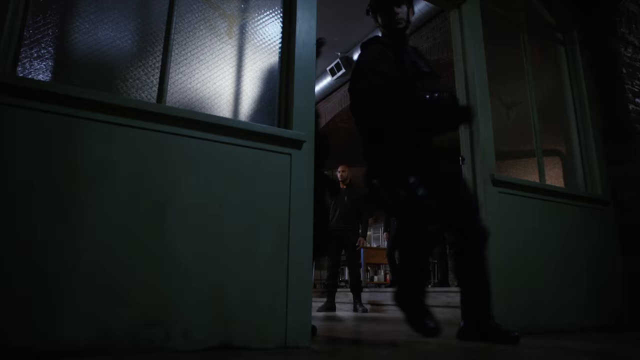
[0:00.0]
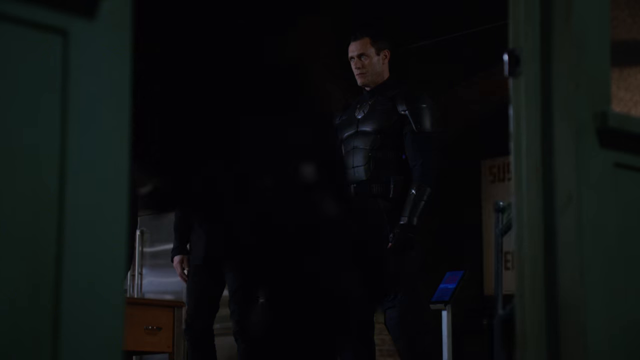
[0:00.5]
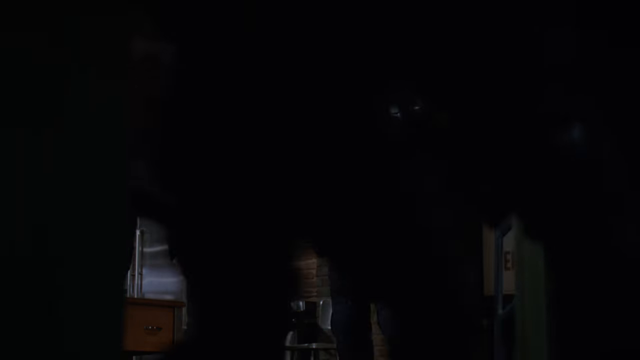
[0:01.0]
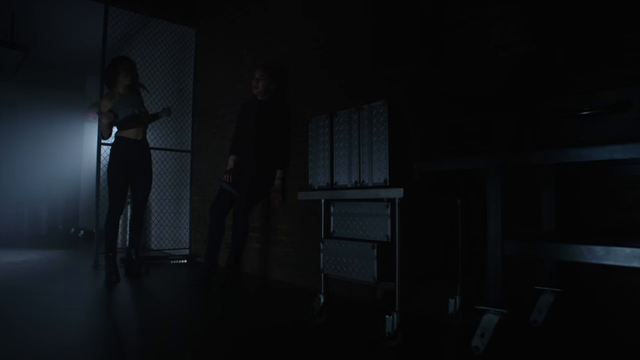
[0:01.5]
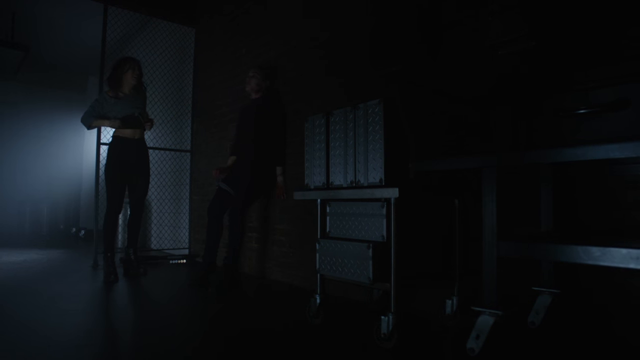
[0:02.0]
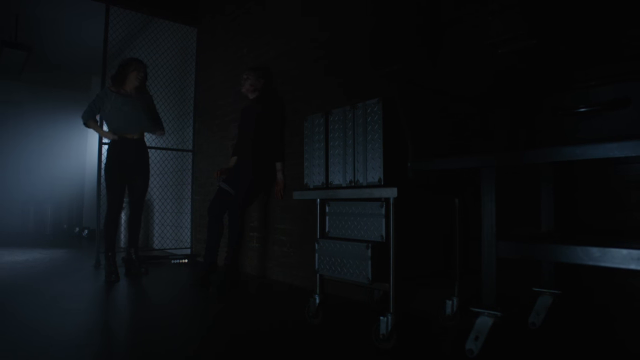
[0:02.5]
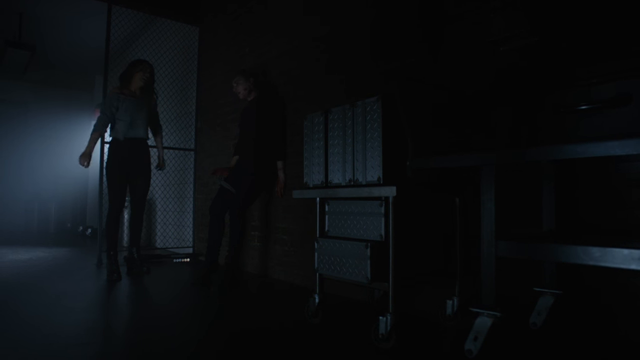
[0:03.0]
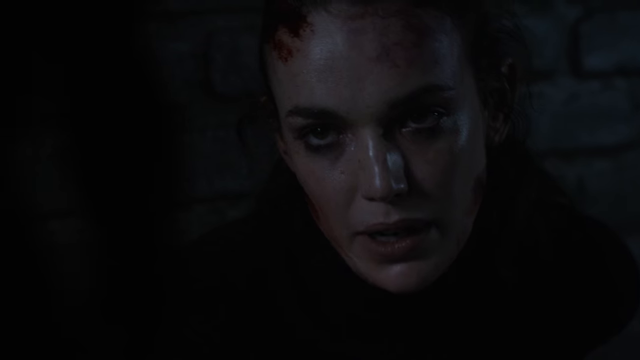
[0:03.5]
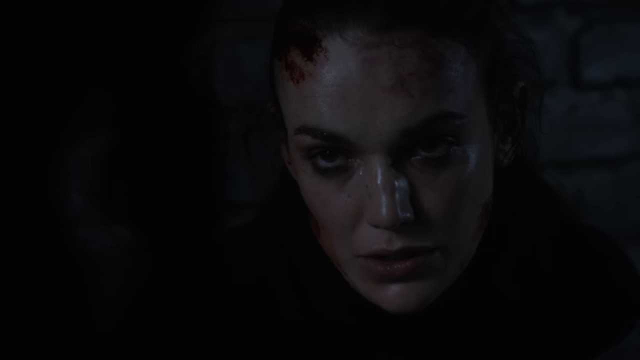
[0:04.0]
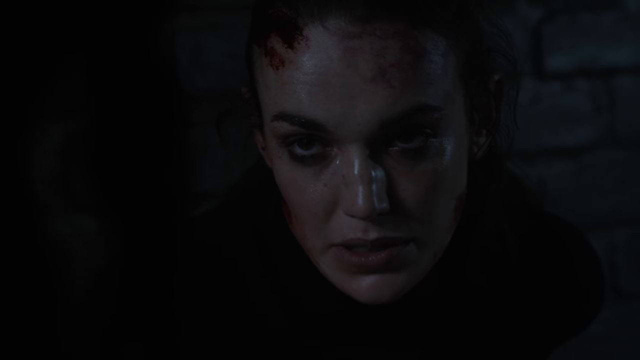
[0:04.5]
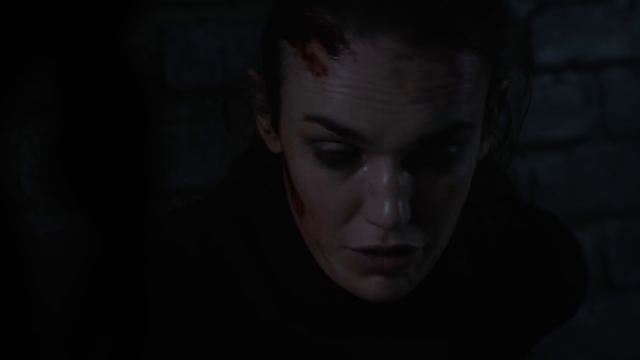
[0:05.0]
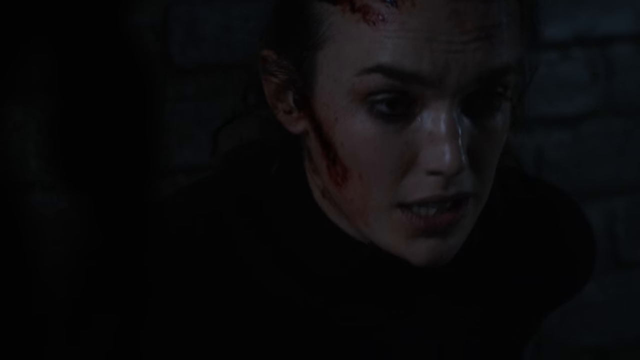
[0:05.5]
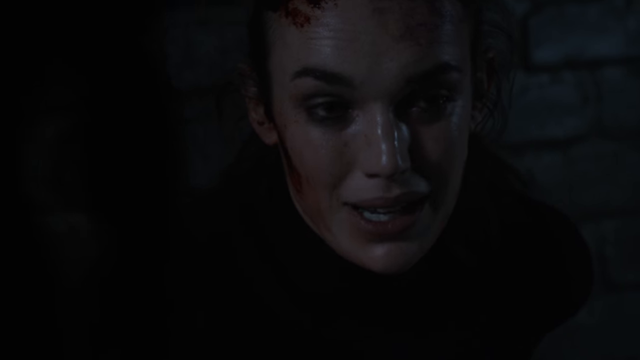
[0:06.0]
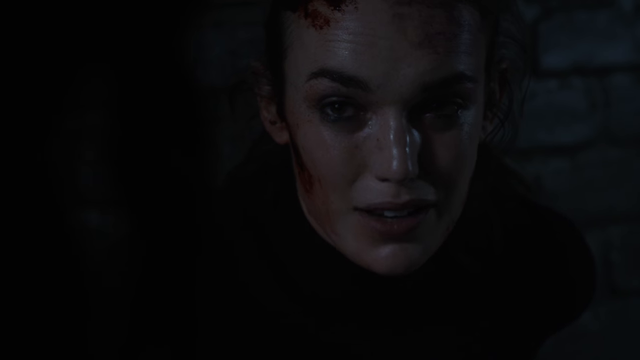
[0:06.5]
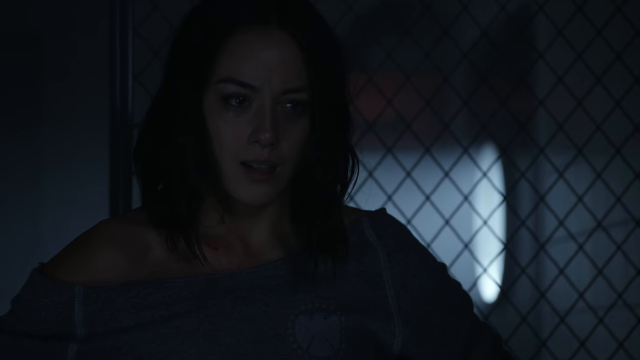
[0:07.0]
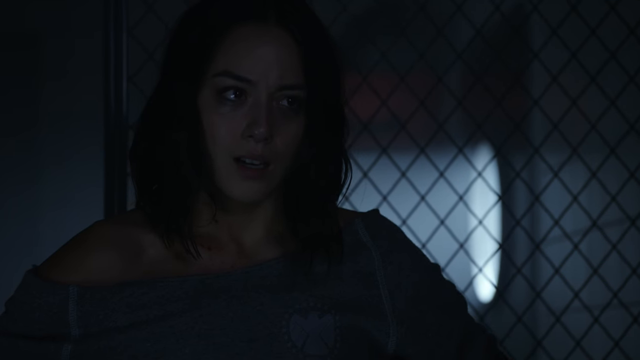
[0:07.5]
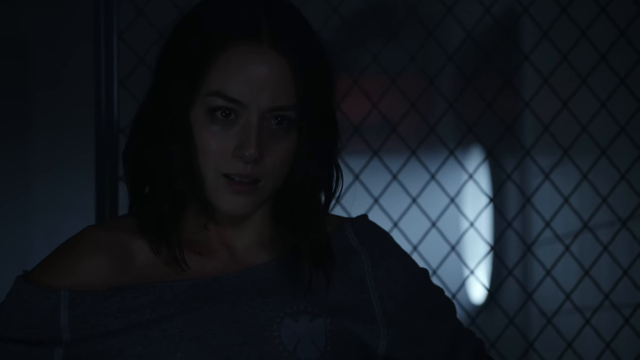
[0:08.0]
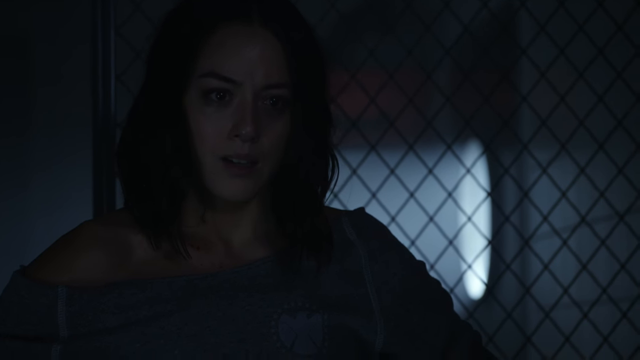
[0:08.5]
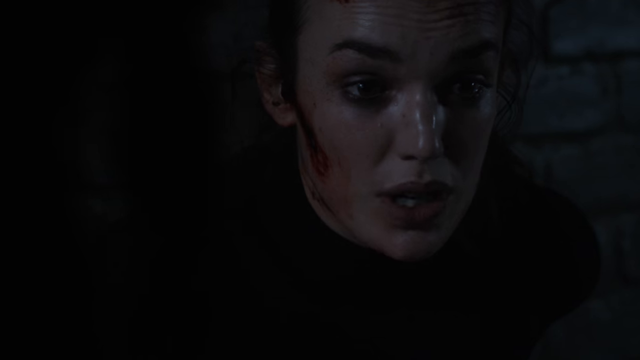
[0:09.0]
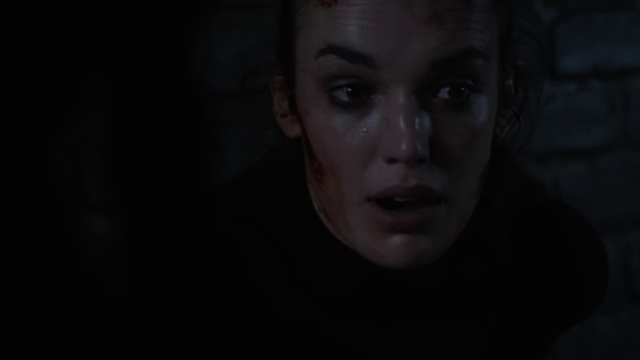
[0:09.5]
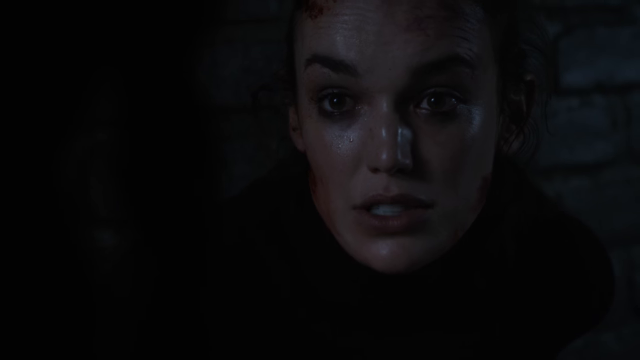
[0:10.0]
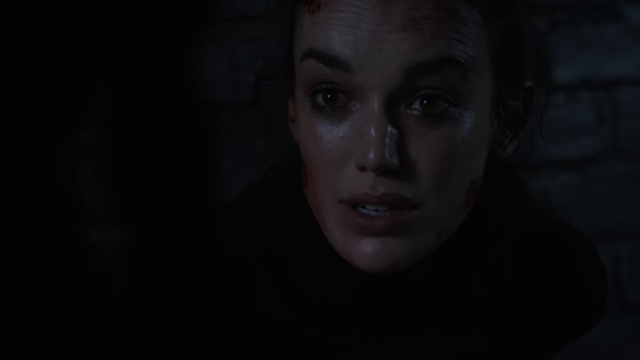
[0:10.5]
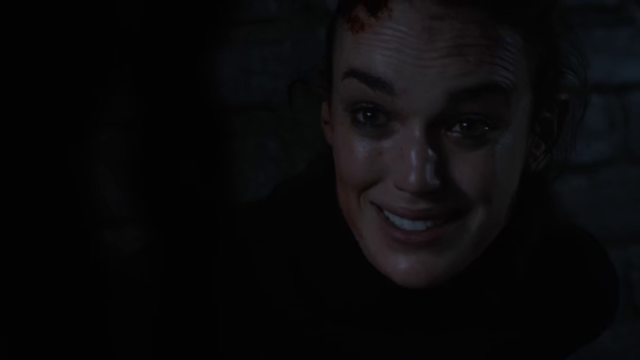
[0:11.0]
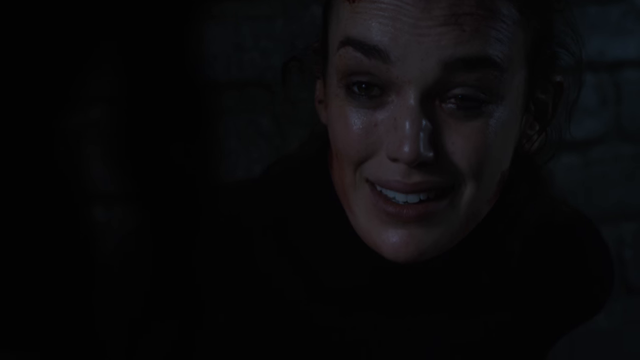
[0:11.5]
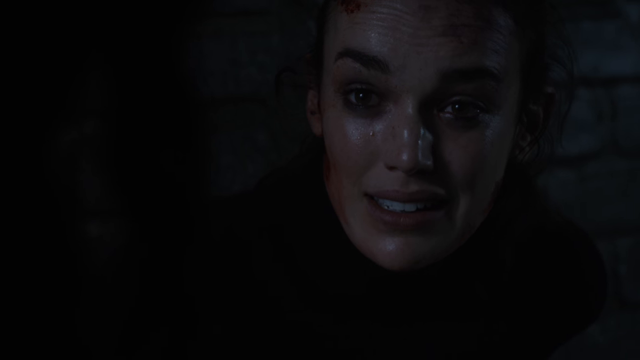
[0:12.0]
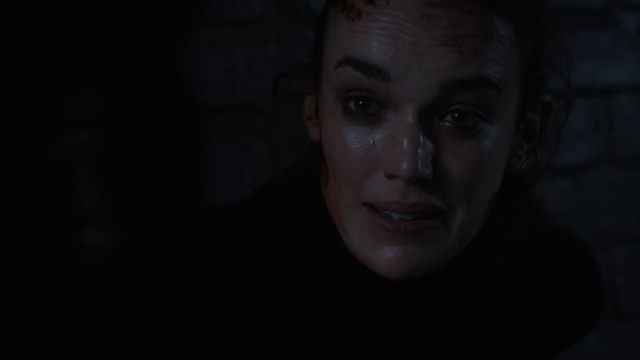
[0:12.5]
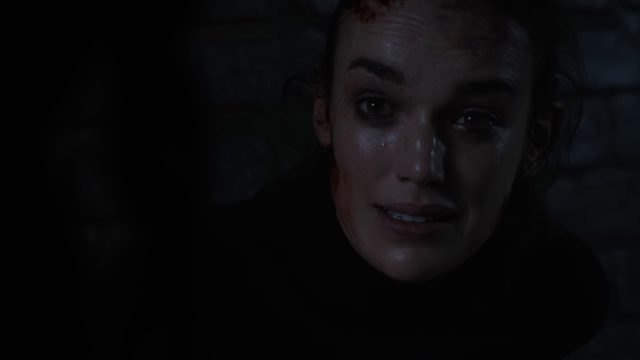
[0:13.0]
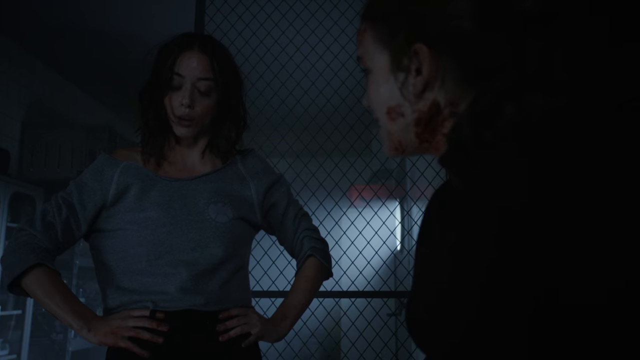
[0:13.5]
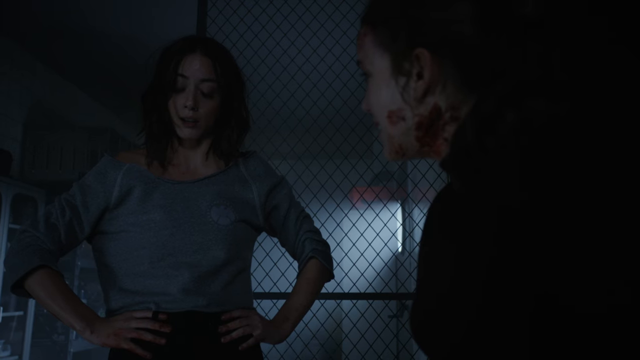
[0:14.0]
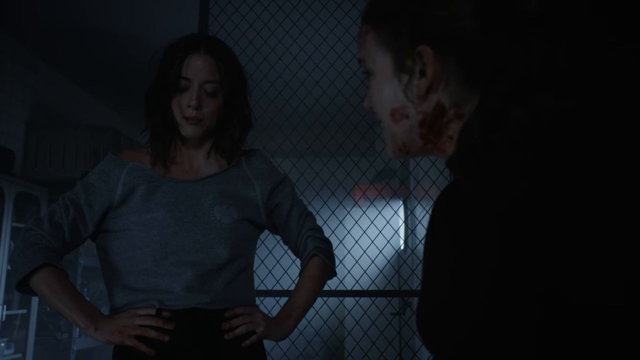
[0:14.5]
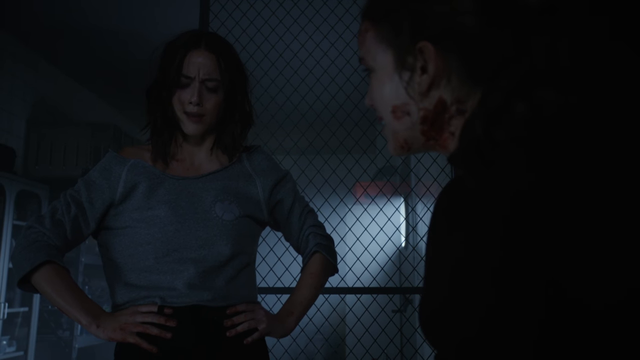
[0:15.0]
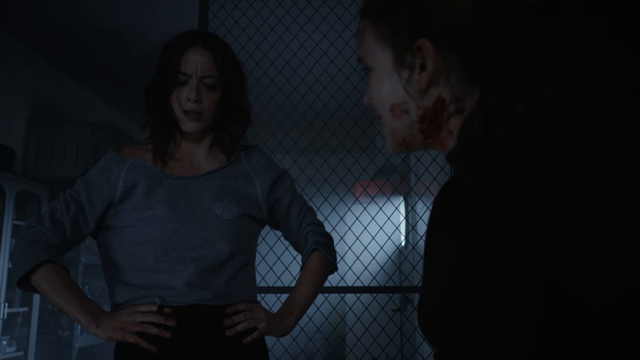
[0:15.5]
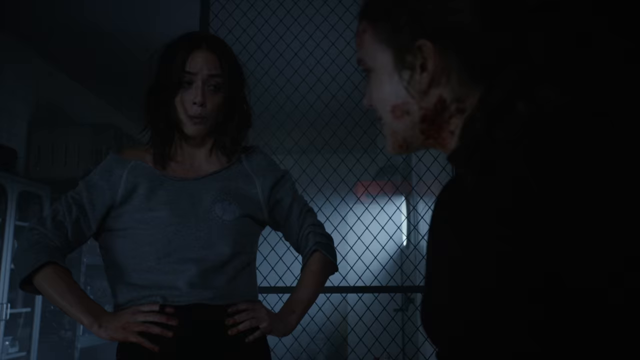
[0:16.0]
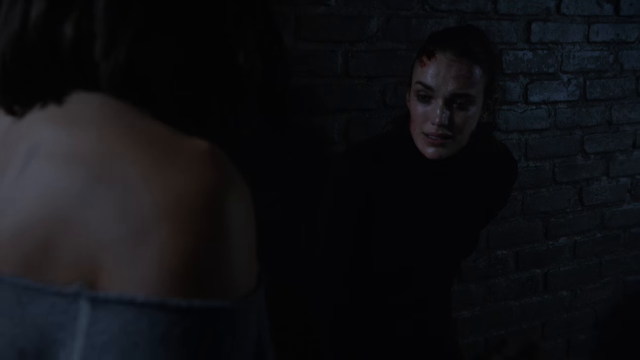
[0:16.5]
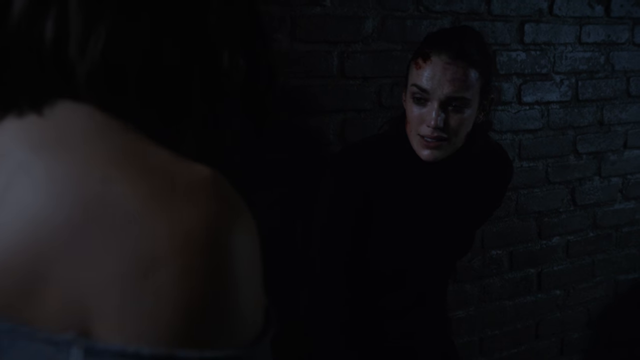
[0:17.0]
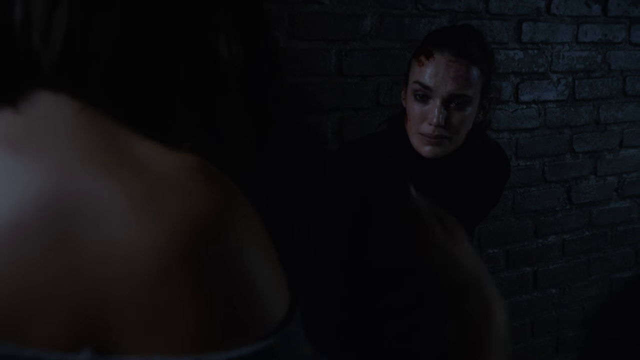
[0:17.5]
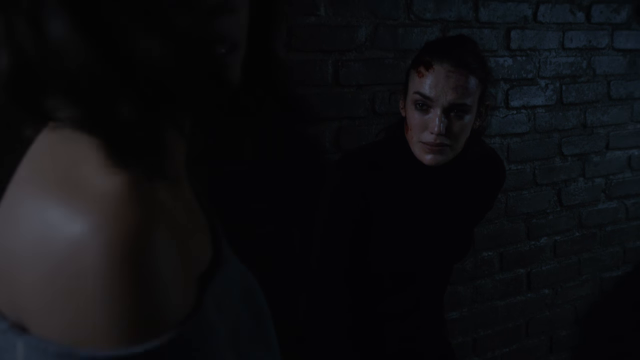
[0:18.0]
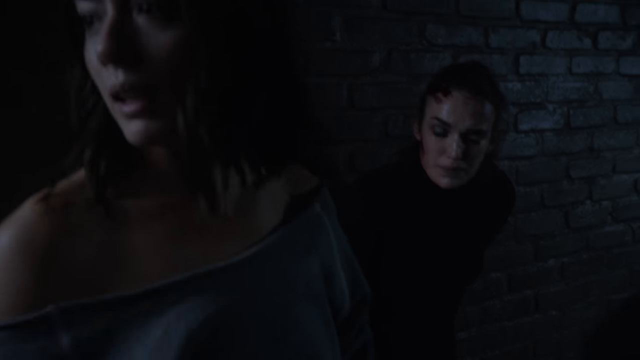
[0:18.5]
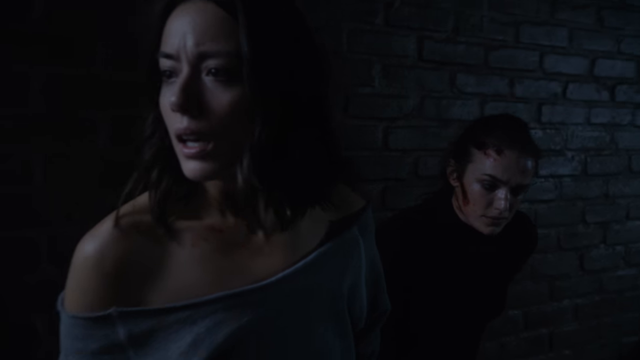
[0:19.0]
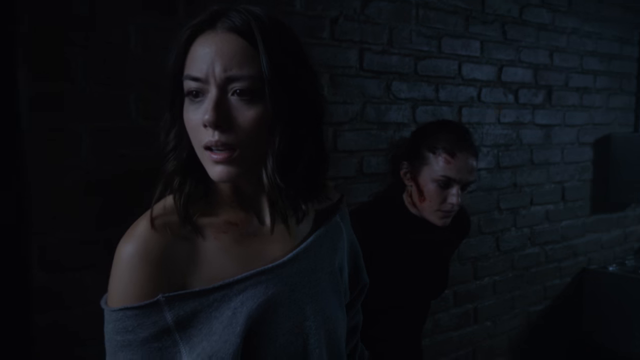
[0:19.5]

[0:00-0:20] The video opens on what look like two police officers in an office area, and two people pass them to go into another room. The scene then changes to a room inside a building that contains a chain-link fenced-in area. The room is rather dark, looks older and a little dingy, and has a brick wall that appears light red or reddish brown. There is metal furniture like green metal file cabinets. Two people are in the room, apparently two women. One has dark hair, is probably in her 20s, and wears a light blue top that hangs off one shoulder. She is talking to the second person, apparently a woman of about the same age, mid-20s to early 30s, who has what looks like scarring or burns on her face, possibly acid burns, and maybe a little blood. This second woman wears dark clothing. They seem to be having an intense conversation, standing about five, maybe six feet from each other.